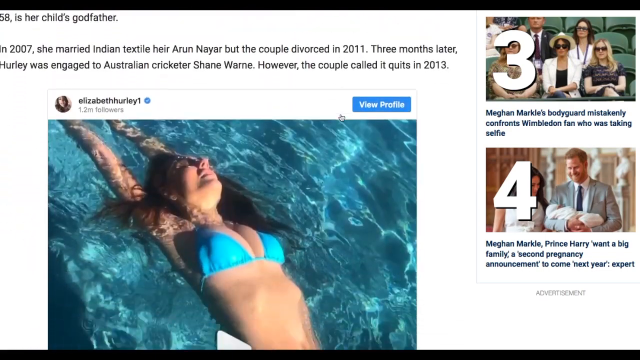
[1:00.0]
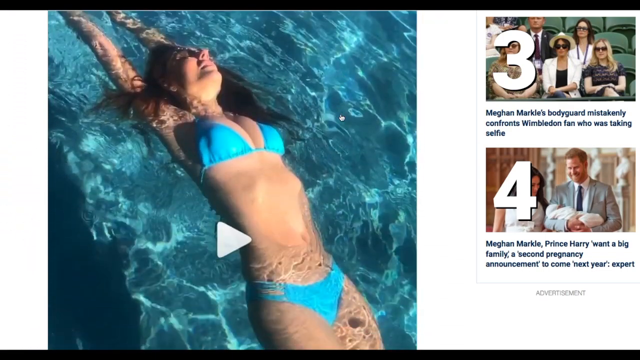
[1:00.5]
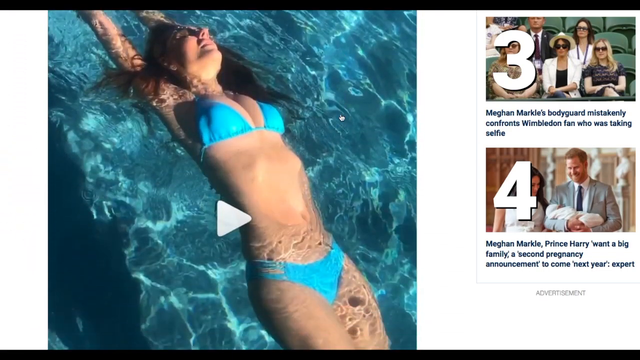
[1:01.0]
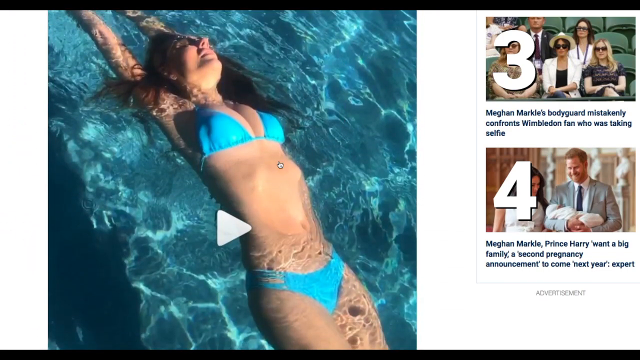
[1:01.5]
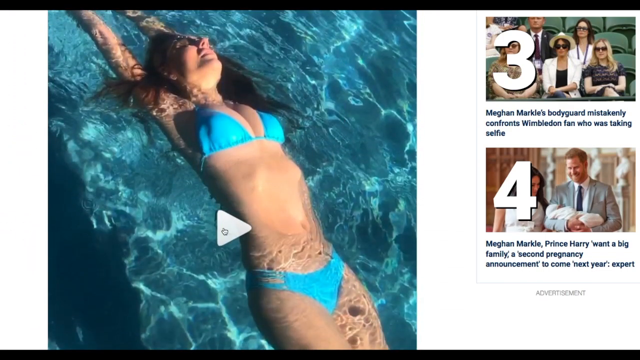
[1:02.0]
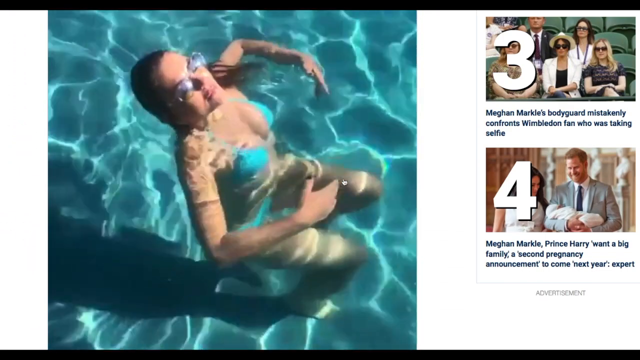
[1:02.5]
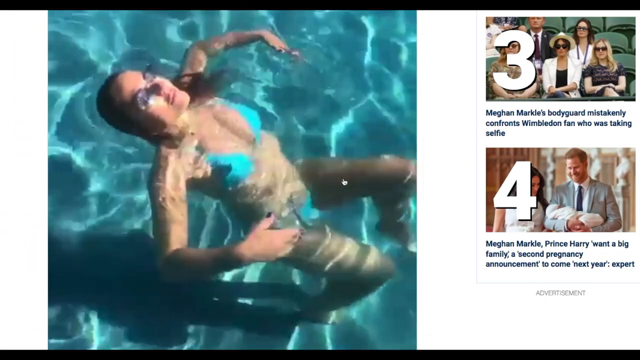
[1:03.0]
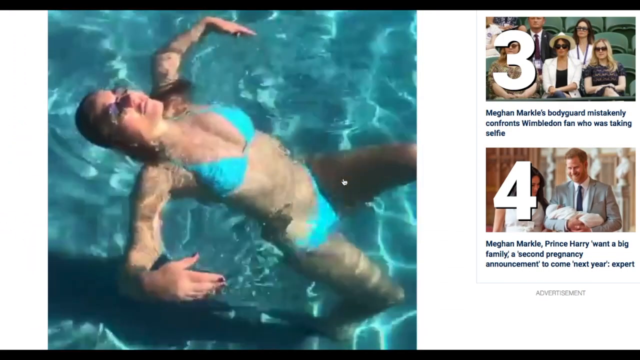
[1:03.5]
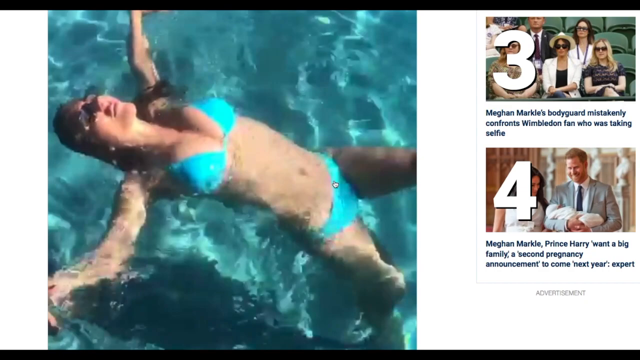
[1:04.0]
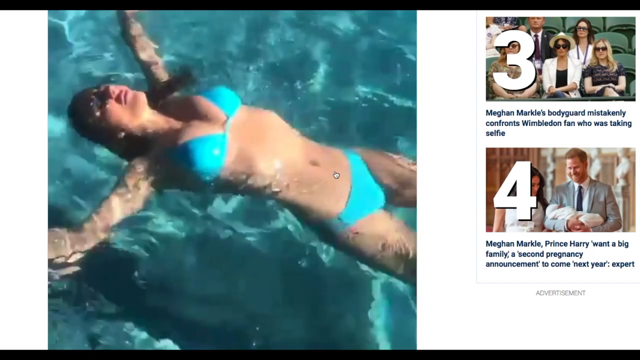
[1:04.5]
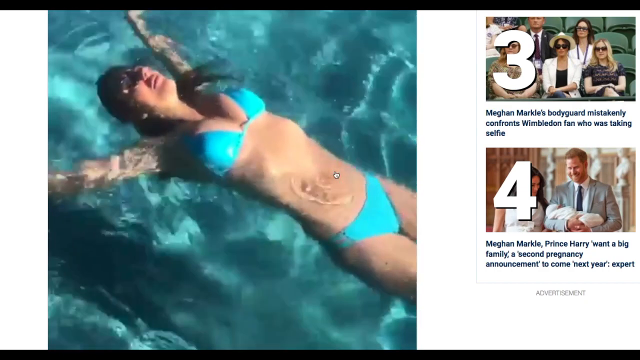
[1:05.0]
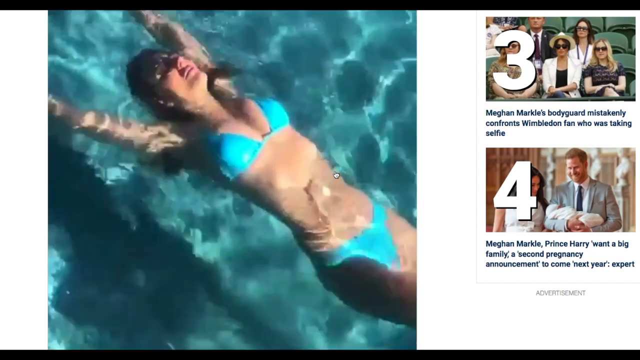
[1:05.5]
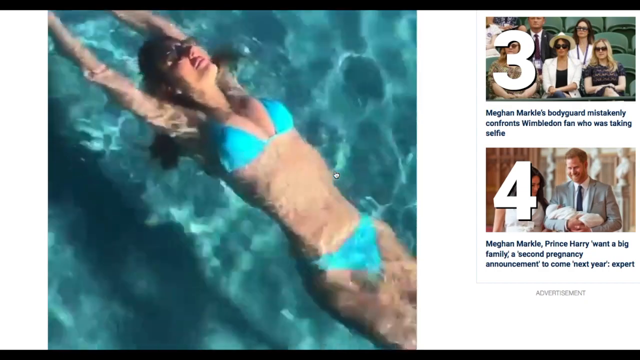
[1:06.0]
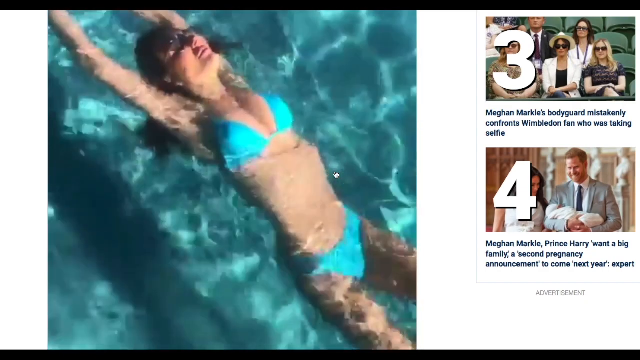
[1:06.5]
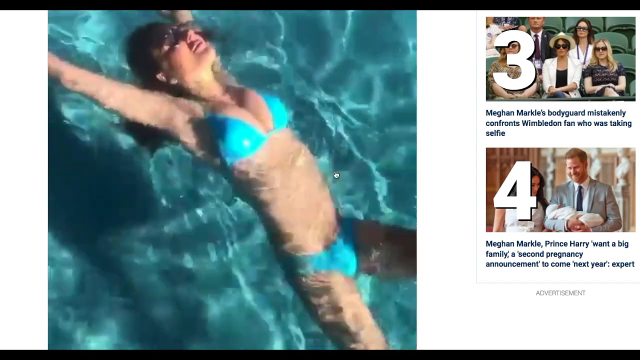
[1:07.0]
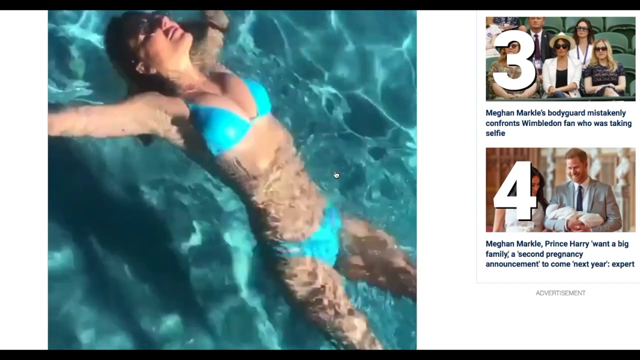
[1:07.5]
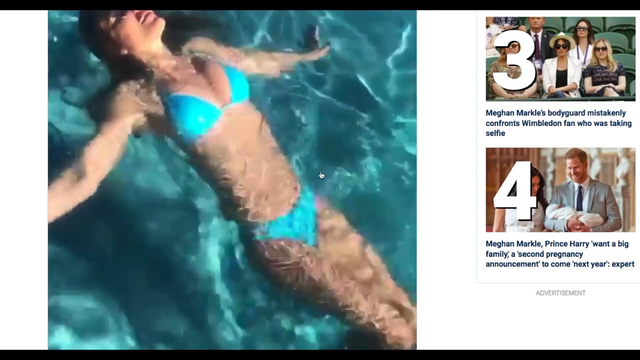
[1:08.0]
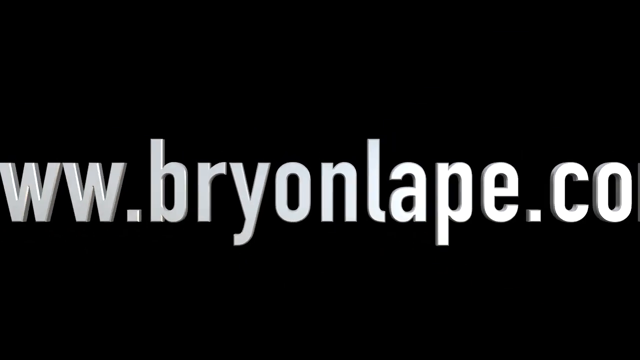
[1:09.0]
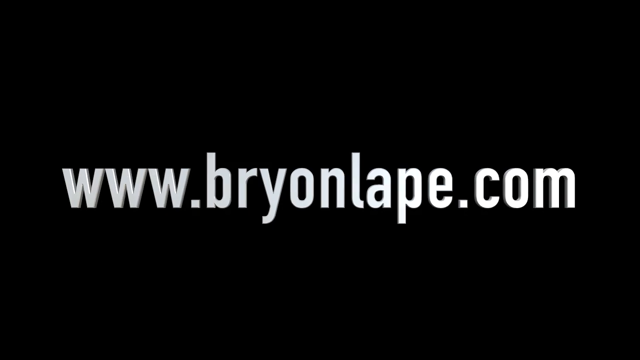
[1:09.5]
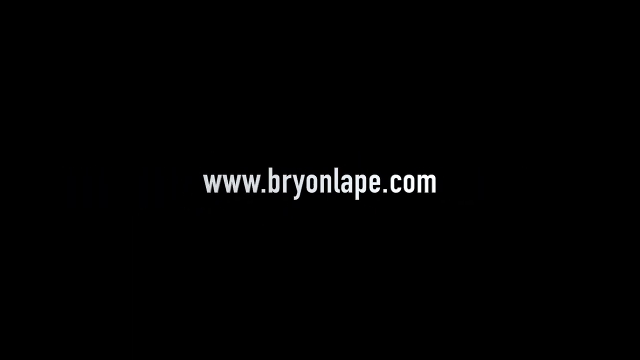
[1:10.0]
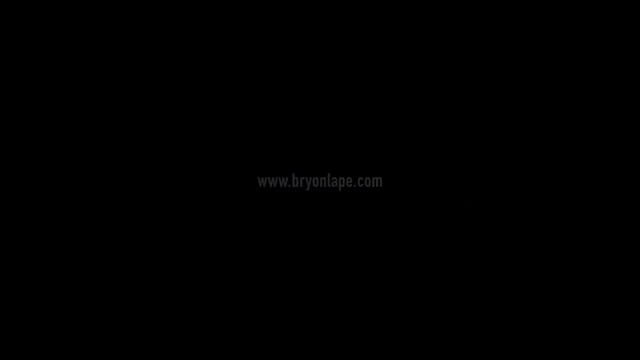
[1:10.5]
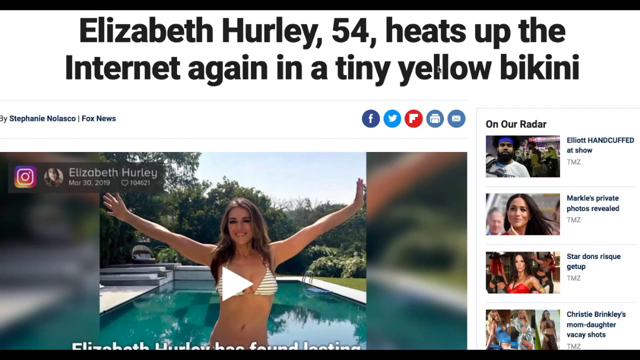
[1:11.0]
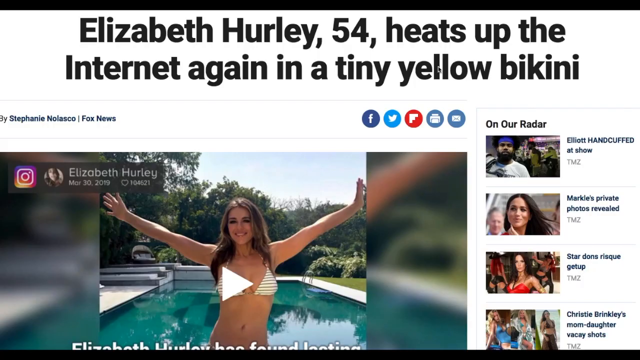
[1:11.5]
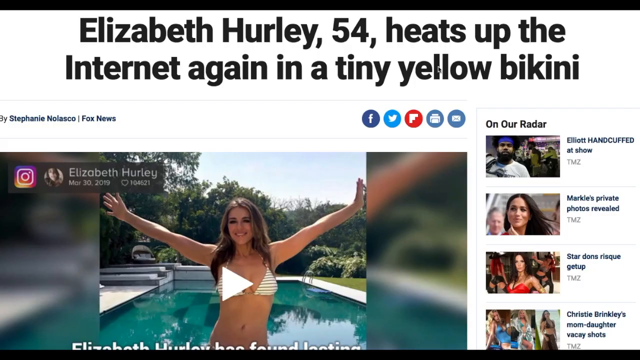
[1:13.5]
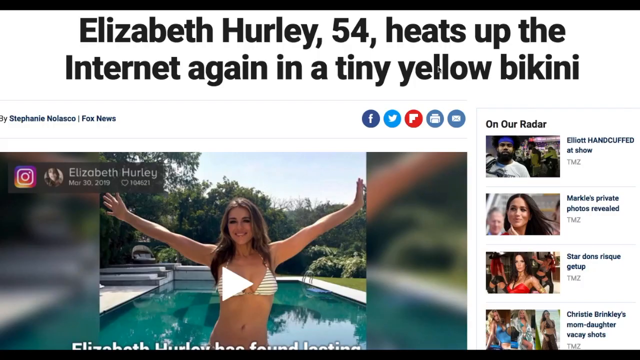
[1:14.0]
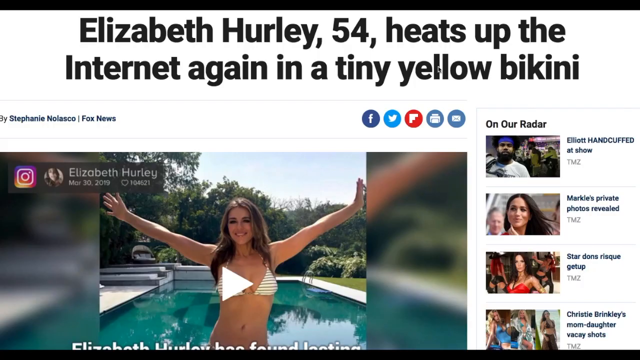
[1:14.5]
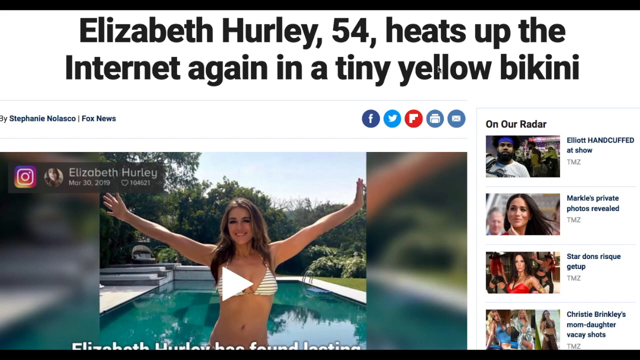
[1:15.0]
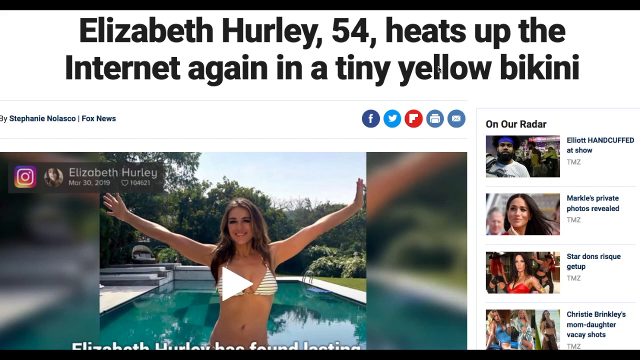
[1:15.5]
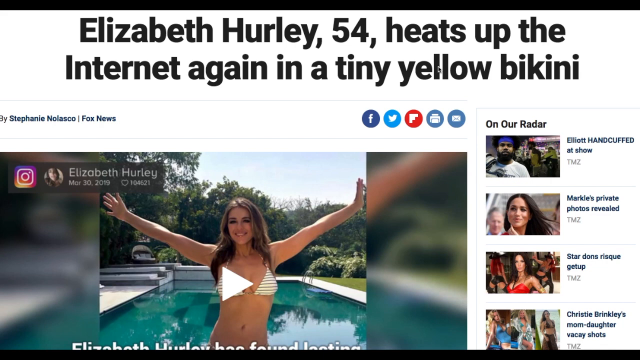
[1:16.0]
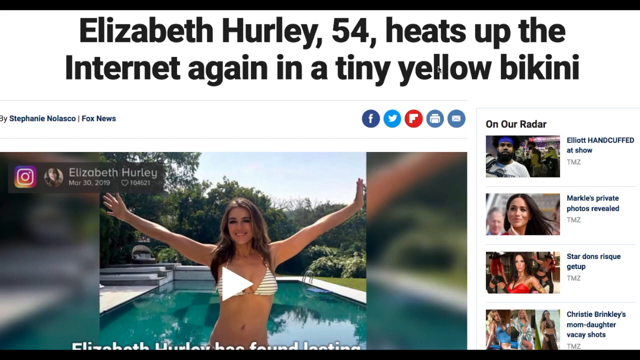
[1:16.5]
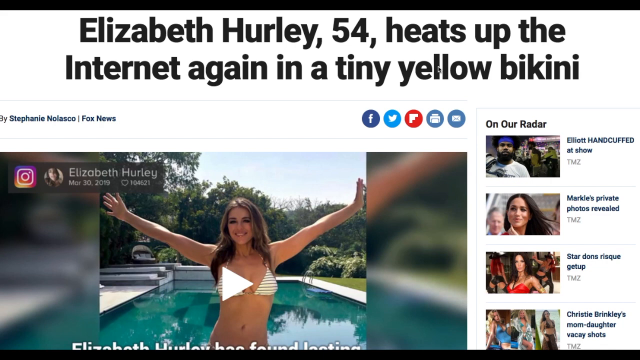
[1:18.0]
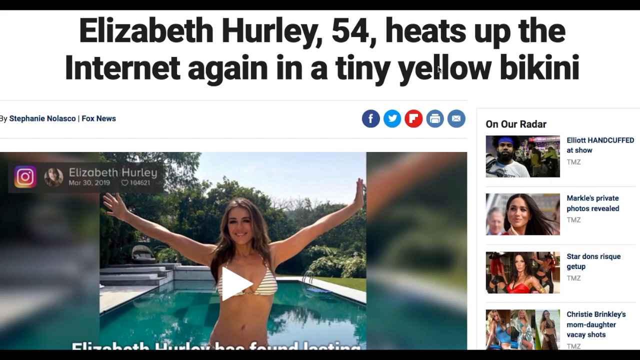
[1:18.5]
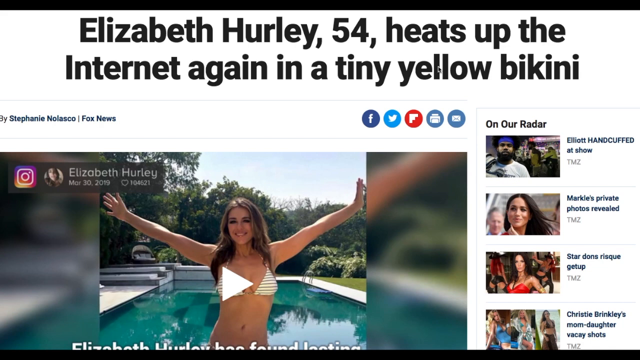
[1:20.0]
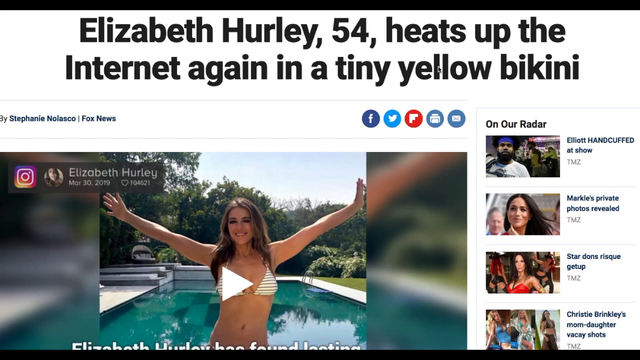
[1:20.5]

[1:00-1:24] The website shows a video that seems to be from an Instagram post, apparently posted by Elizabeth Hurley. She is swimming in a swimming pool in a blue bikini, her hands and arms extended above her head as she swims. Another clip shows her in the water with her head out, then she puts her arms above her head as she continues to swim in the pool. On the right side are two more images: one with the number three showing people sitting on green chairs, and below it one with the number four showing Meghan Markle and Prince Harry, who is holding a baby wrapped in a white blanket.